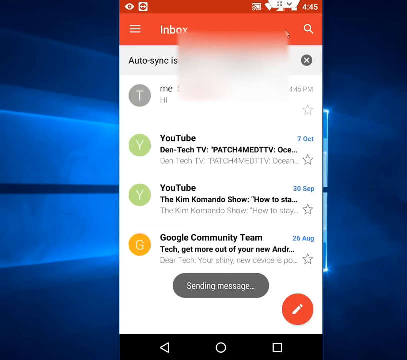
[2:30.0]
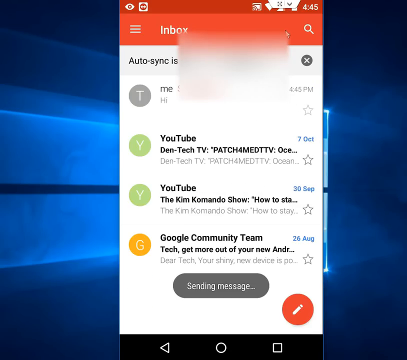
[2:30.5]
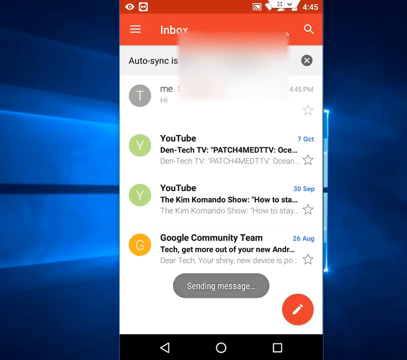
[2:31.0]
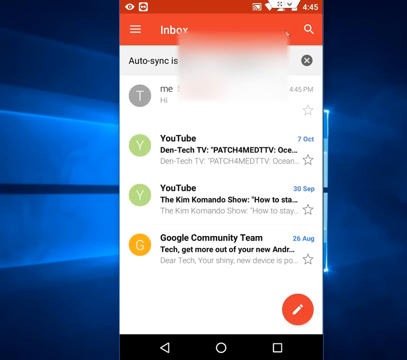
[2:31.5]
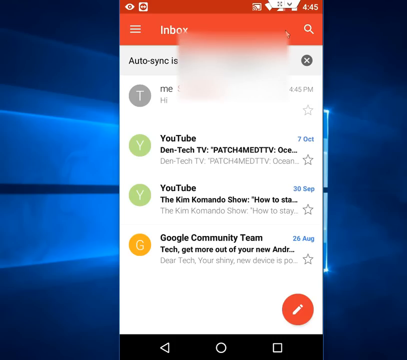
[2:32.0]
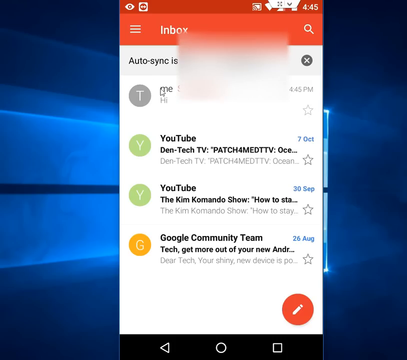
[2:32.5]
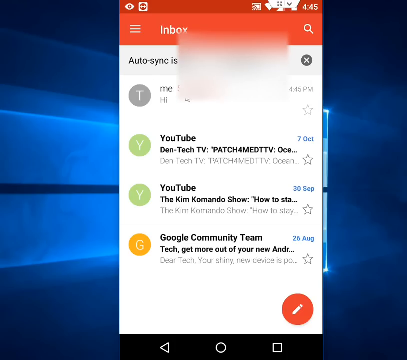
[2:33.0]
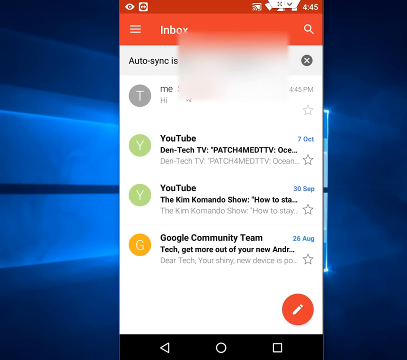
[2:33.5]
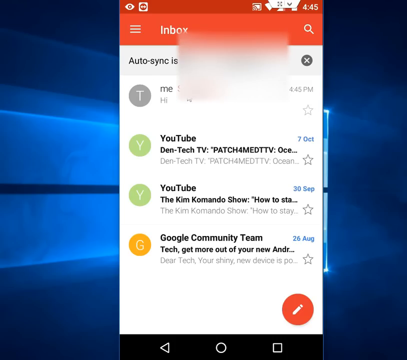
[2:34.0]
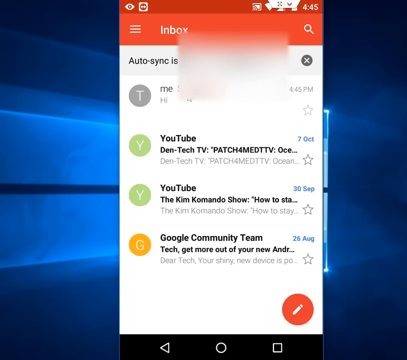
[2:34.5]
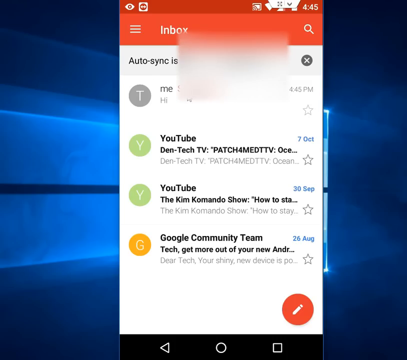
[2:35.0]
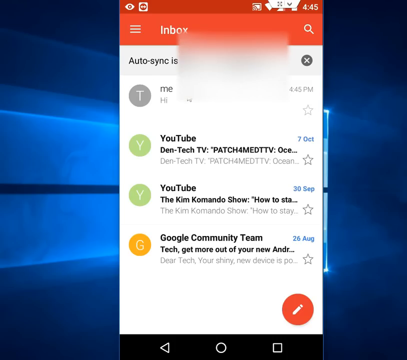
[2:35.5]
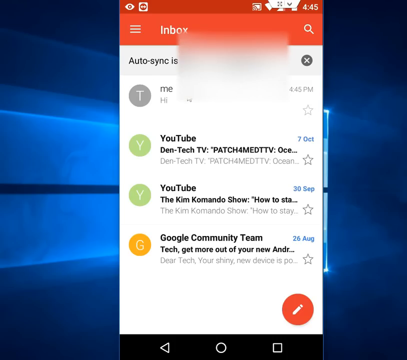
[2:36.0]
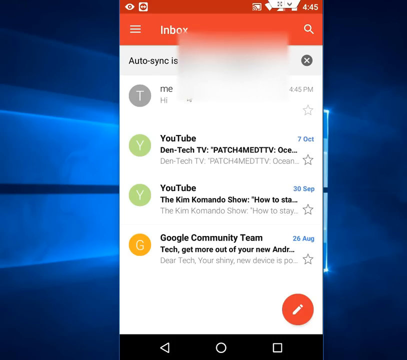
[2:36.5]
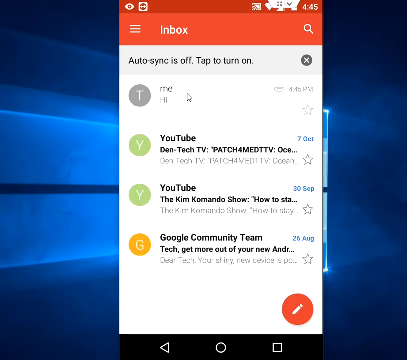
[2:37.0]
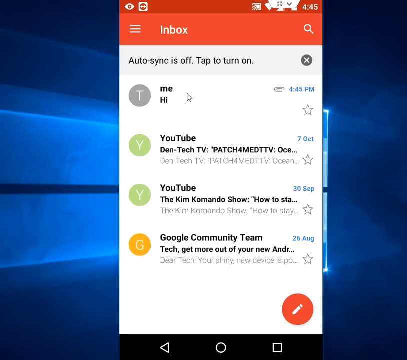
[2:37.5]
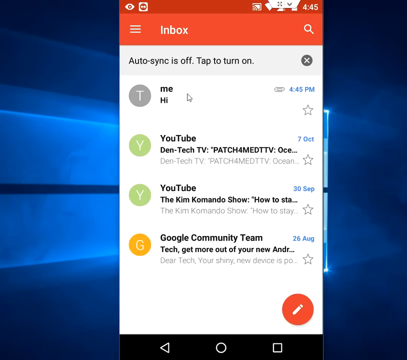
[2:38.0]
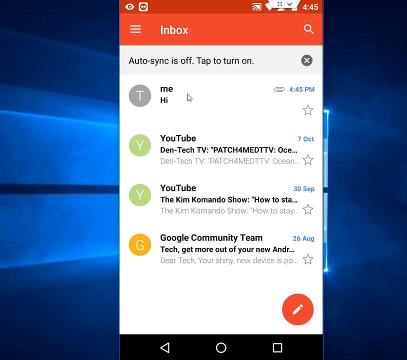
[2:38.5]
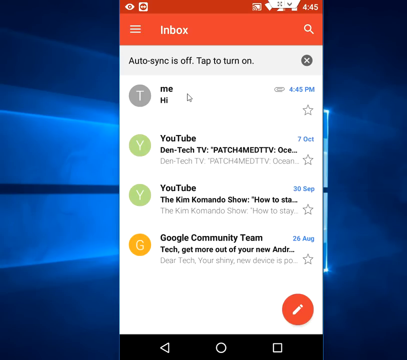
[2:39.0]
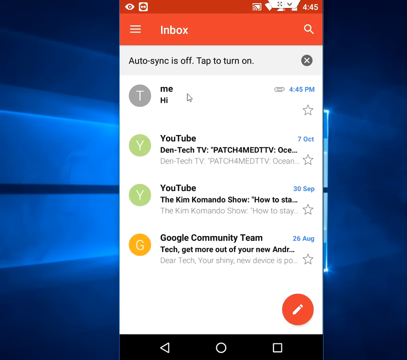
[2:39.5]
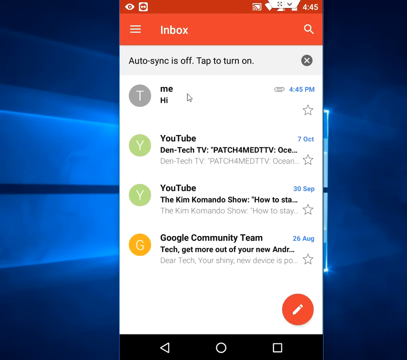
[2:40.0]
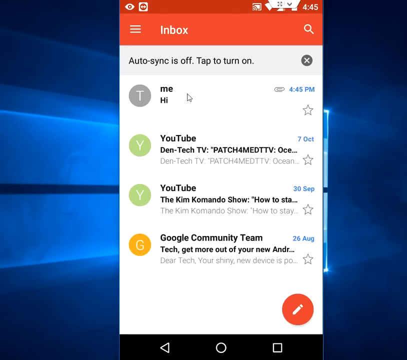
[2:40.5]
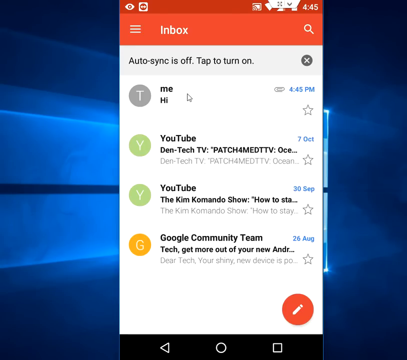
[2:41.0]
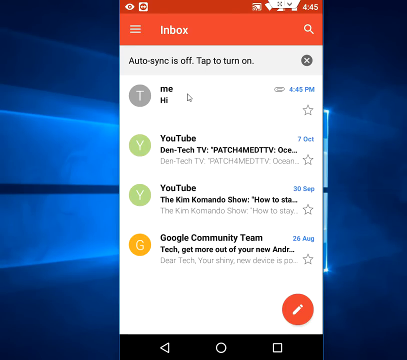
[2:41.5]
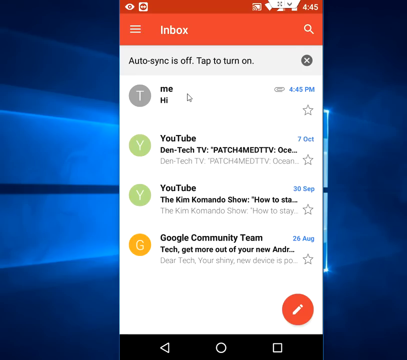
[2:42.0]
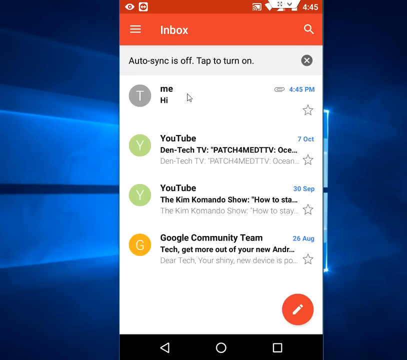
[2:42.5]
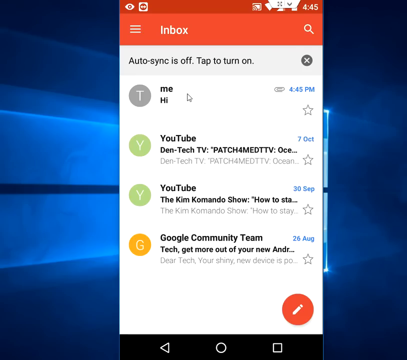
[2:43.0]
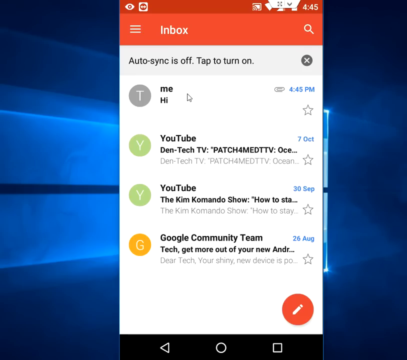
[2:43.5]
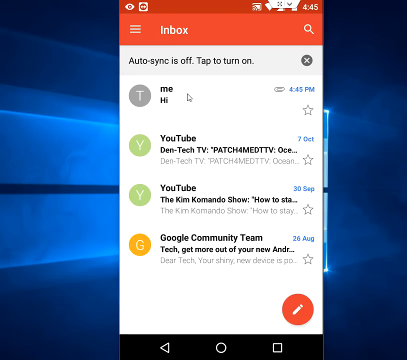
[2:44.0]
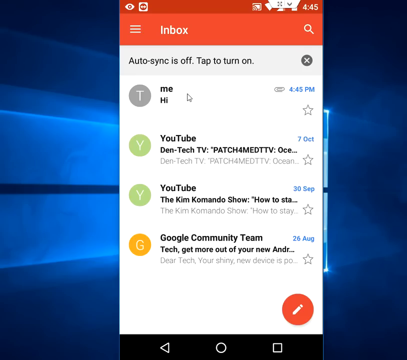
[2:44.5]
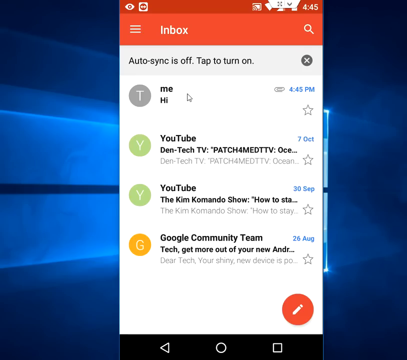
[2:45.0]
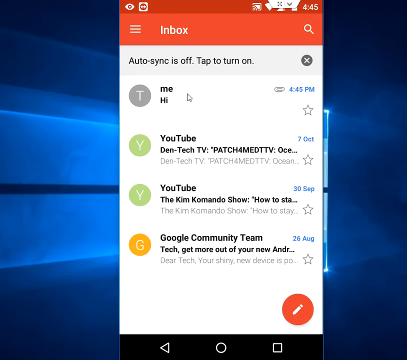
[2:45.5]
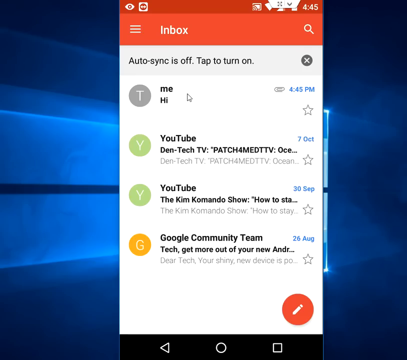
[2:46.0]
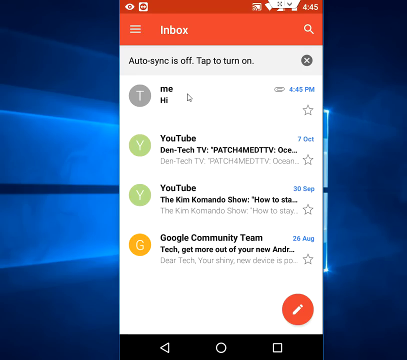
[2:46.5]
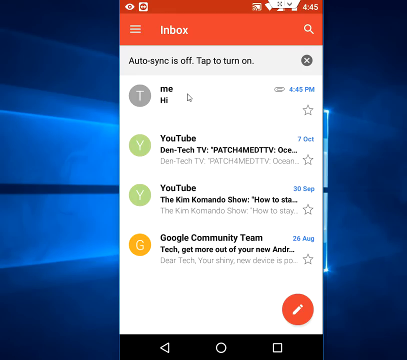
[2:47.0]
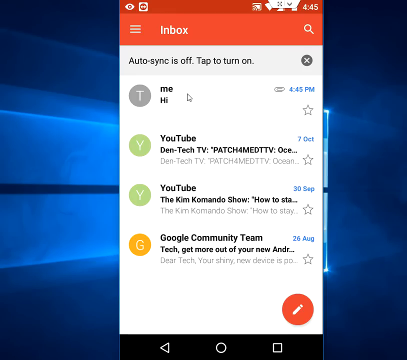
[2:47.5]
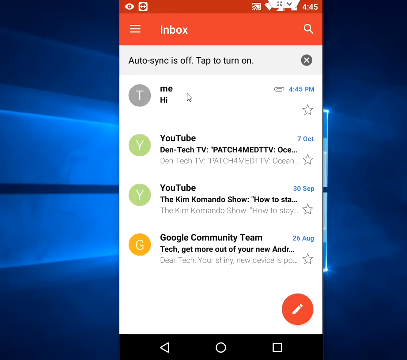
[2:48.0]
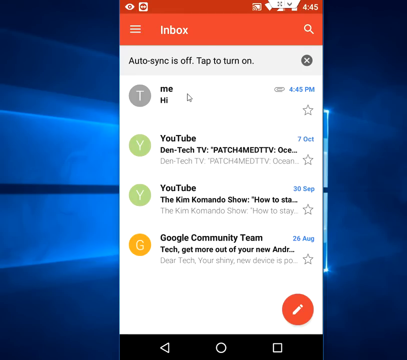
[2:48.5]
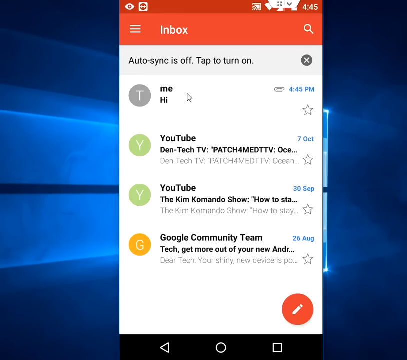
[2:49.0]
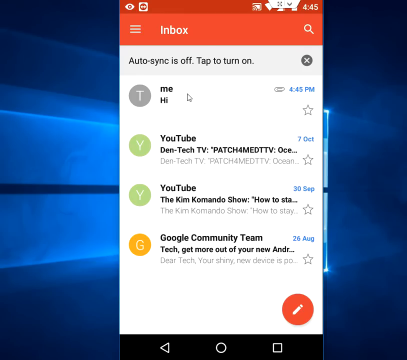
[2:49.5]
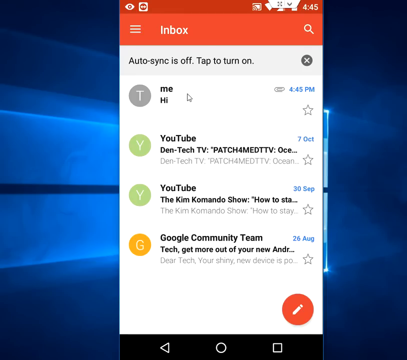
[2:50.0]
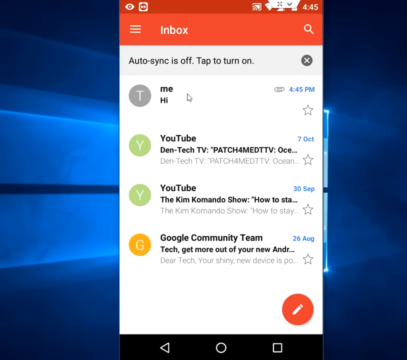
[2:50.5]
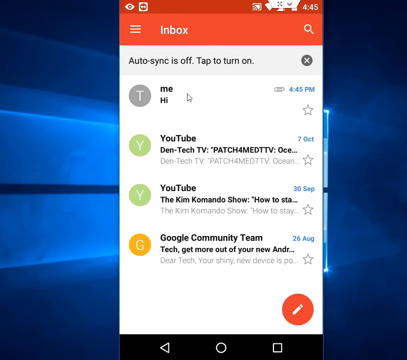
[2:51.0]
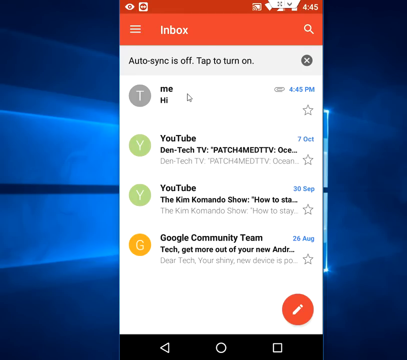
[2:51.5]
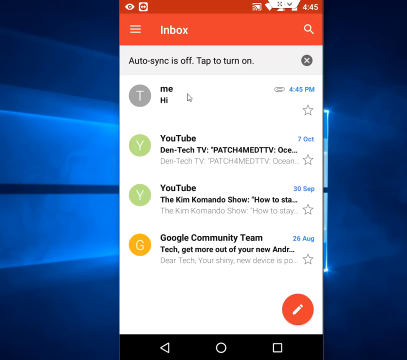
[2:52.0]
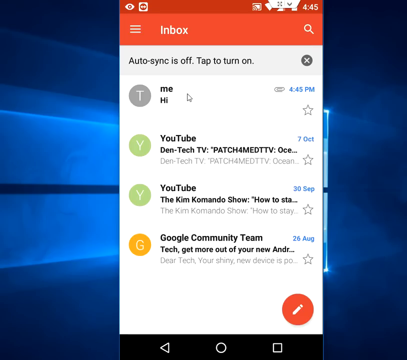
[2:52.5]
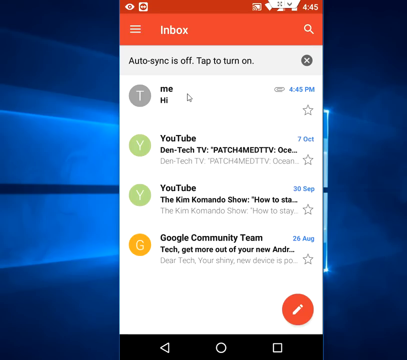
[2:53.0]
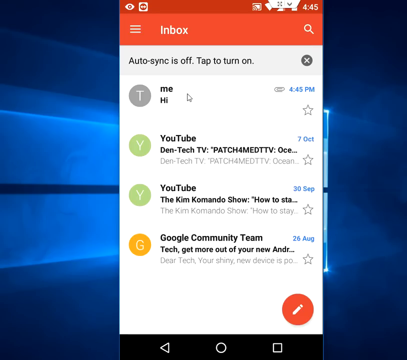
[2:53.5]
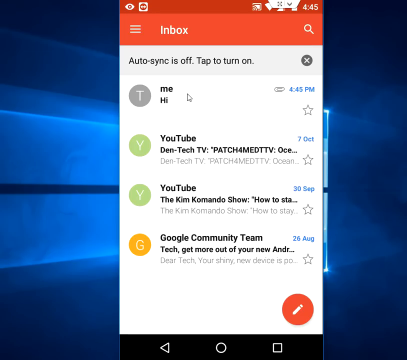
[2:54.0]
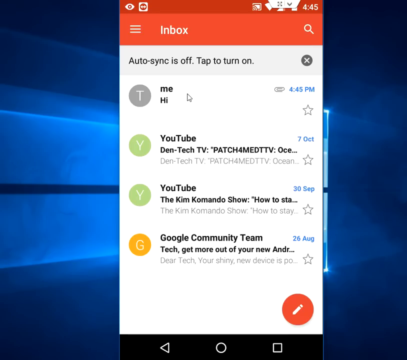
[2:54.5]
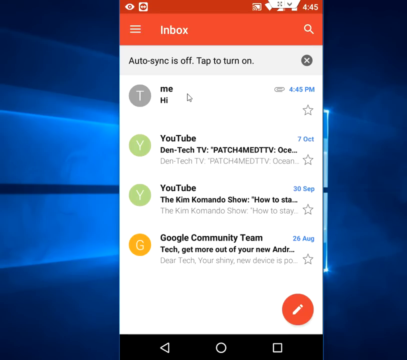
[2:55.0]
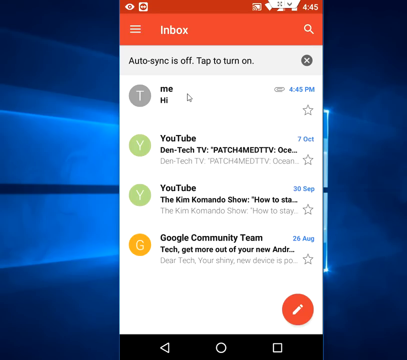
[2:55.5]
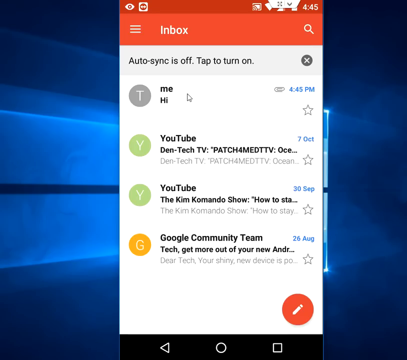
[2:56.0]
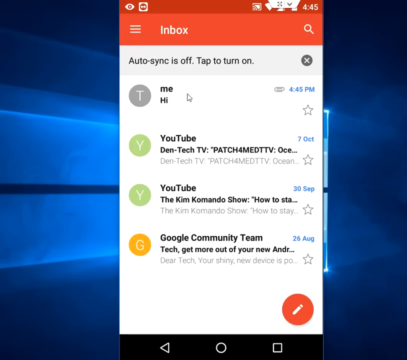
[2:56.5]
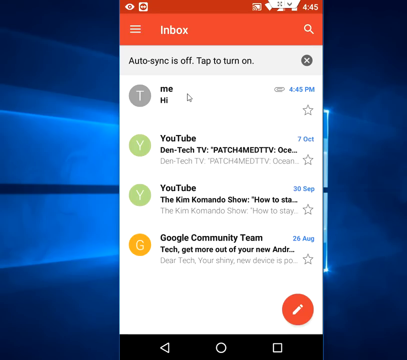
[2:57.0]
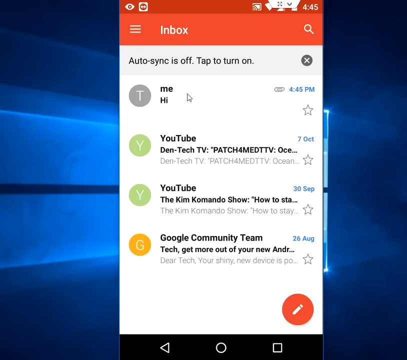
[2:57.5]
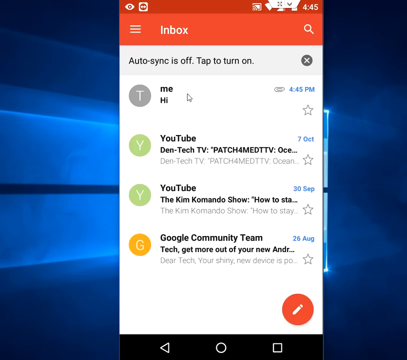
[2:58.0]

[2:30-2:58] The inbox shows an email from "me" with the subject "hi", sent at 4:45 p.m., with a paper clip indicating an attachment and a T in a gray circle to the left. The email below has a green circle with a white Y and is from YouTube, "DEN Tech TV", sent on October 7. Below that is another green circle with a white Y, from YouTube, reading "The Kim commando show how to stay", with a star beside it and dated September 30. The next email has a gold circle with a white G in the middle and is from the "Google community team", dated August 26 on the right, with a star underneath.